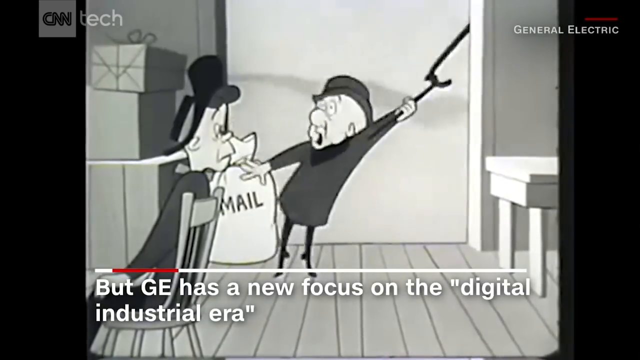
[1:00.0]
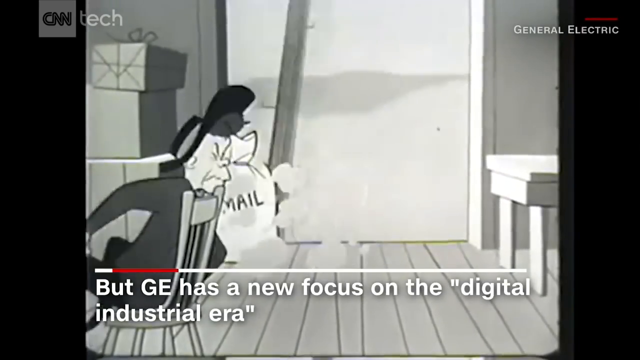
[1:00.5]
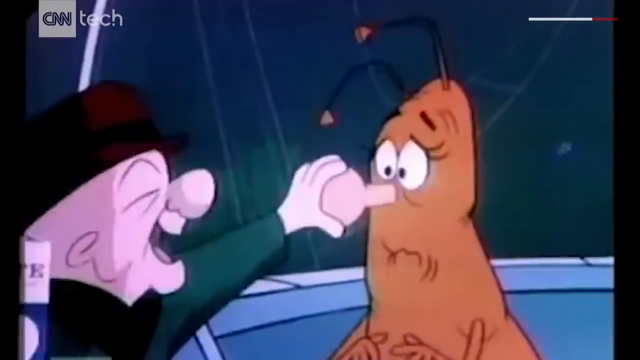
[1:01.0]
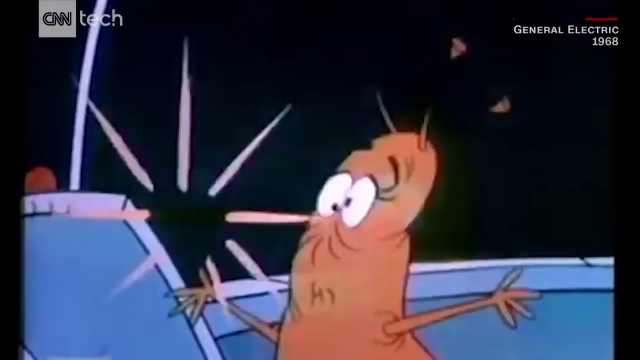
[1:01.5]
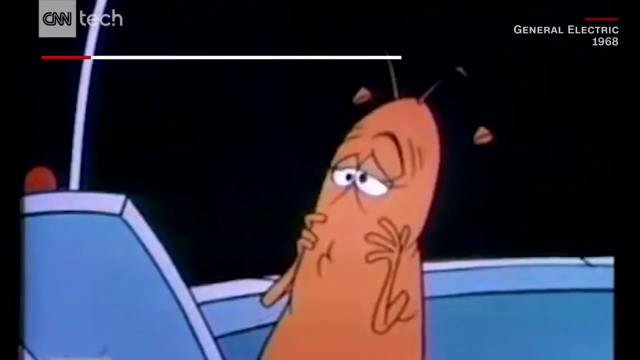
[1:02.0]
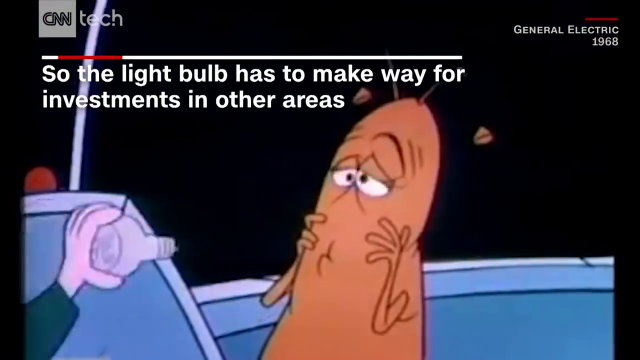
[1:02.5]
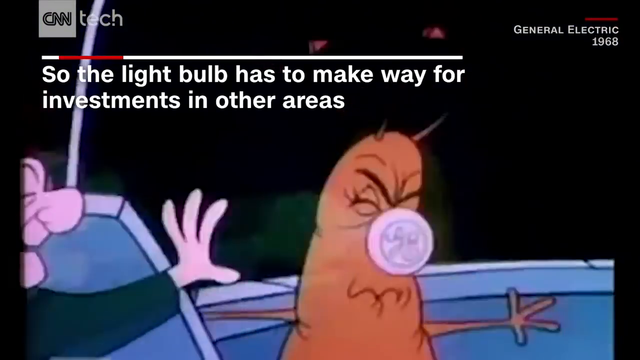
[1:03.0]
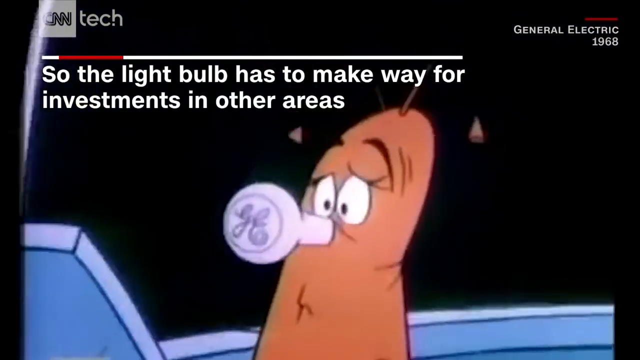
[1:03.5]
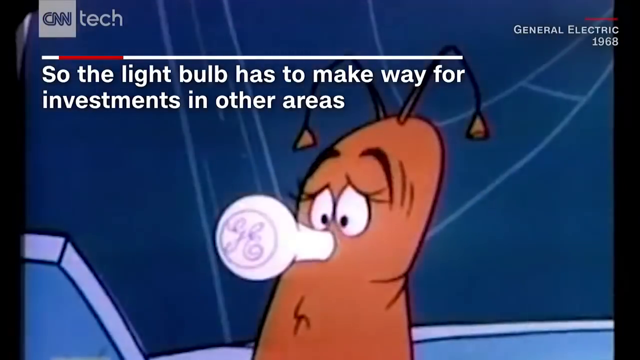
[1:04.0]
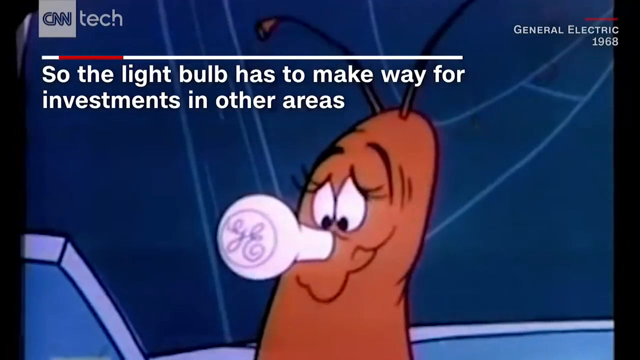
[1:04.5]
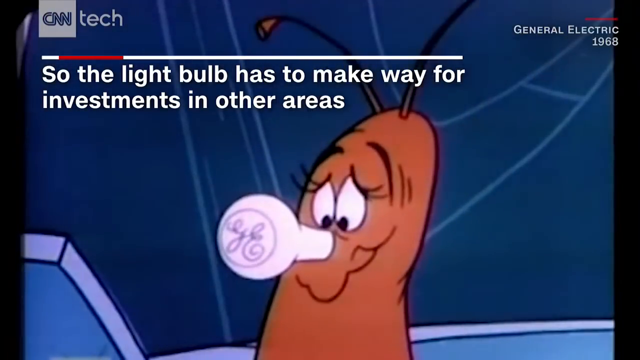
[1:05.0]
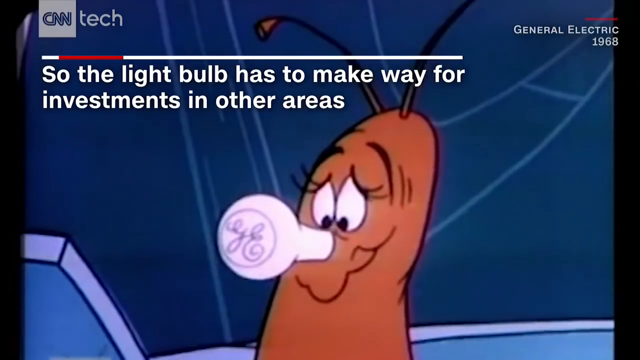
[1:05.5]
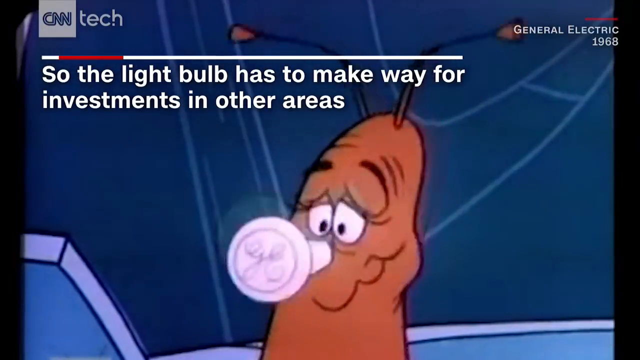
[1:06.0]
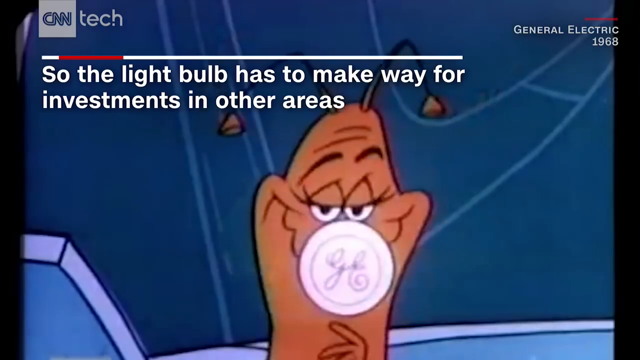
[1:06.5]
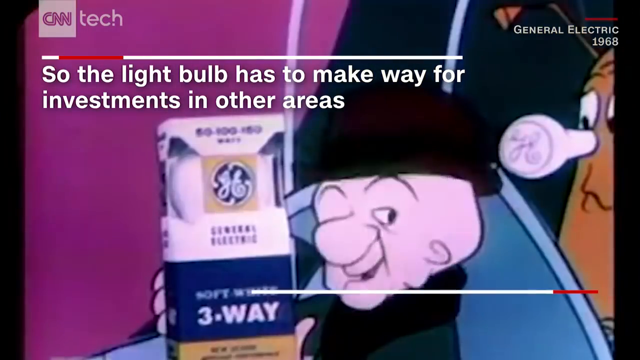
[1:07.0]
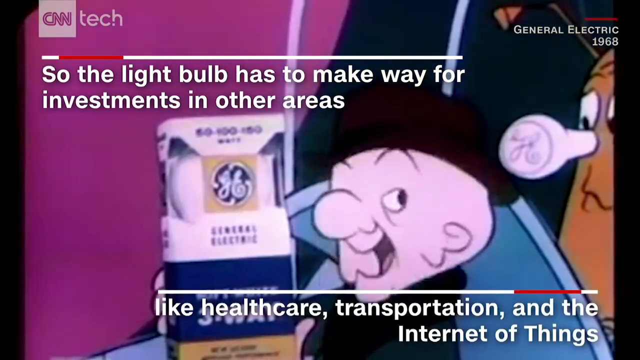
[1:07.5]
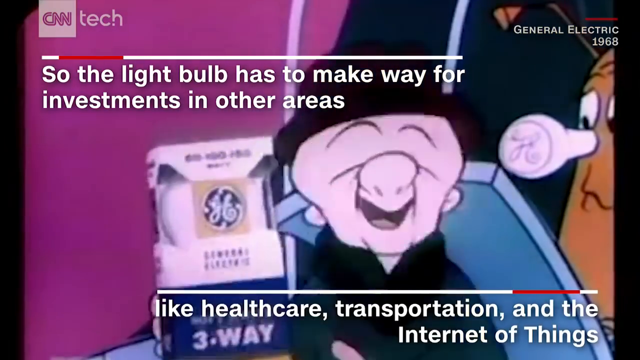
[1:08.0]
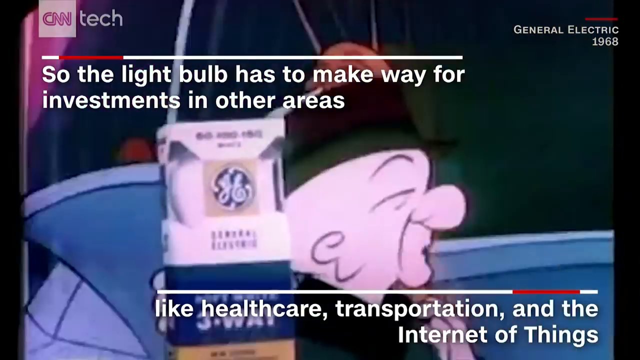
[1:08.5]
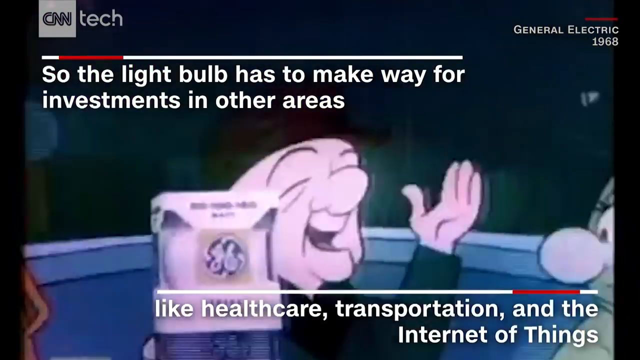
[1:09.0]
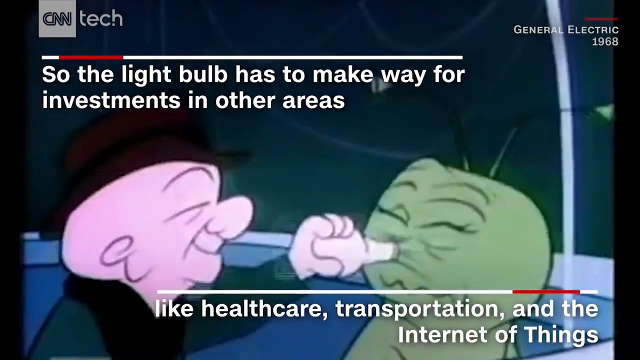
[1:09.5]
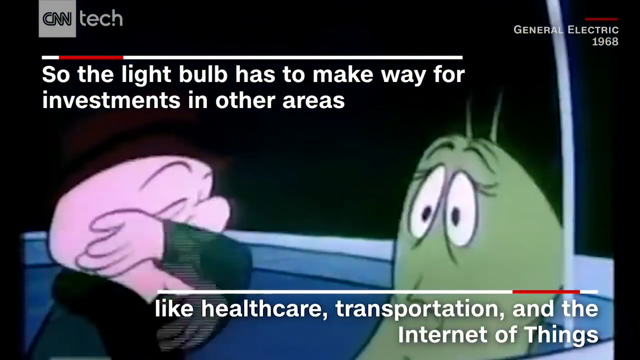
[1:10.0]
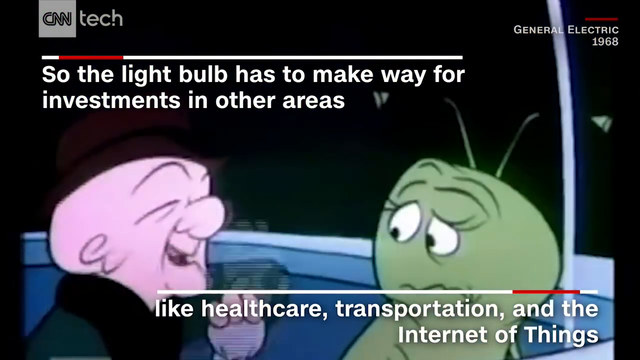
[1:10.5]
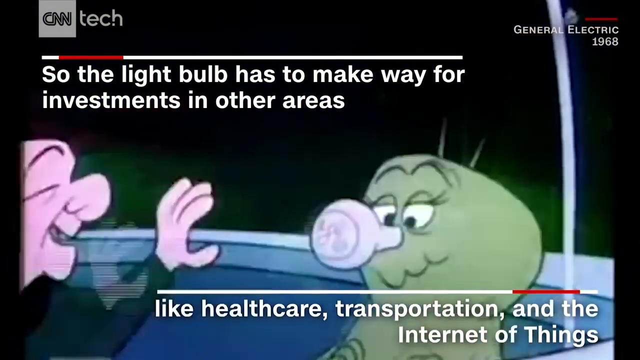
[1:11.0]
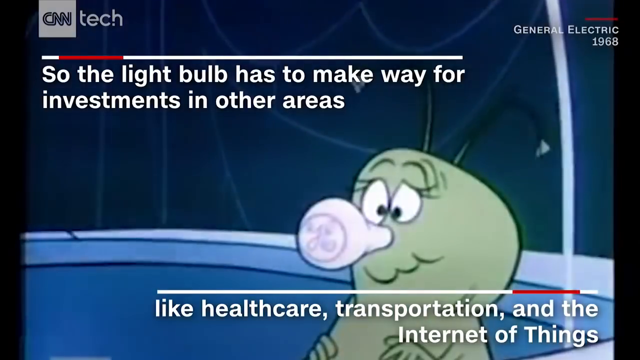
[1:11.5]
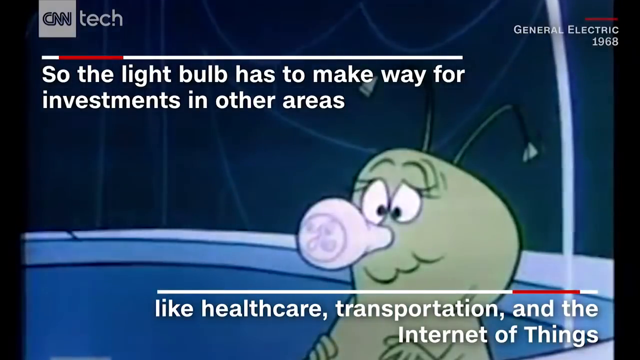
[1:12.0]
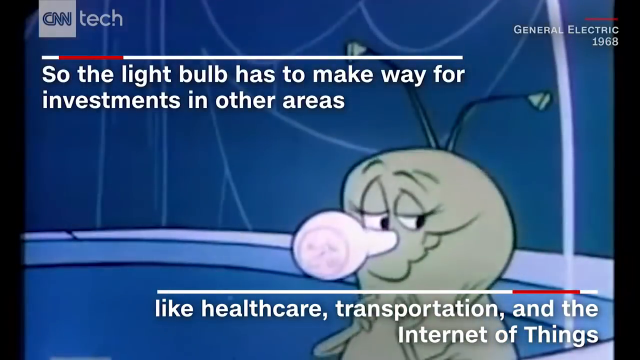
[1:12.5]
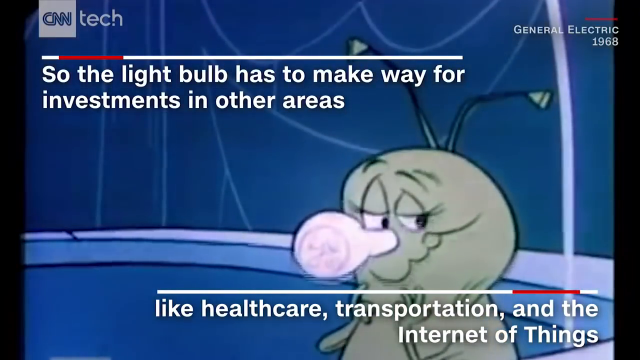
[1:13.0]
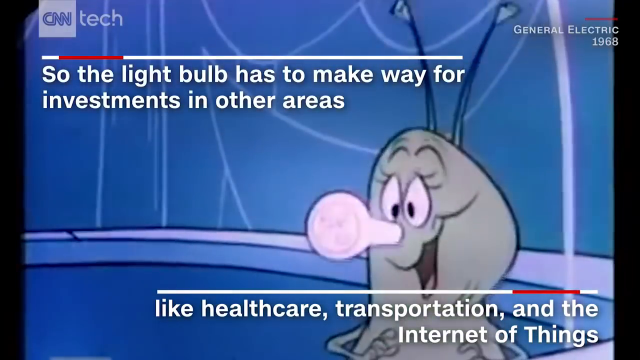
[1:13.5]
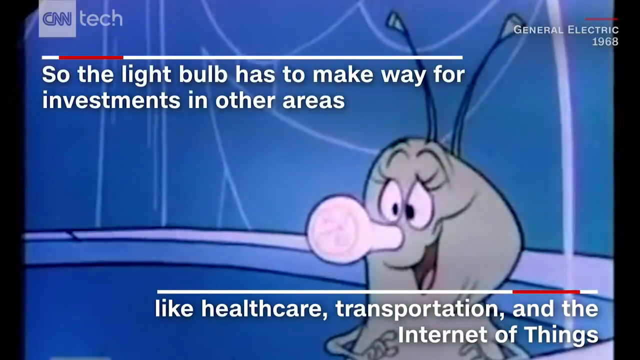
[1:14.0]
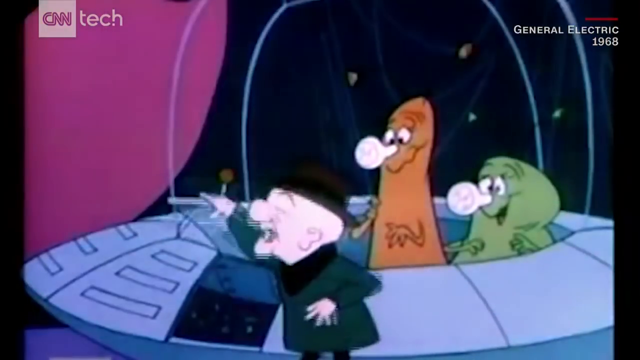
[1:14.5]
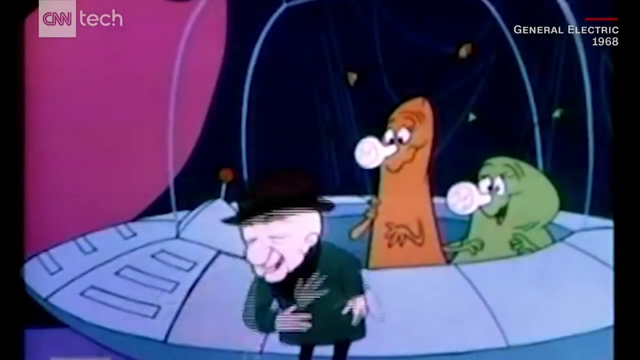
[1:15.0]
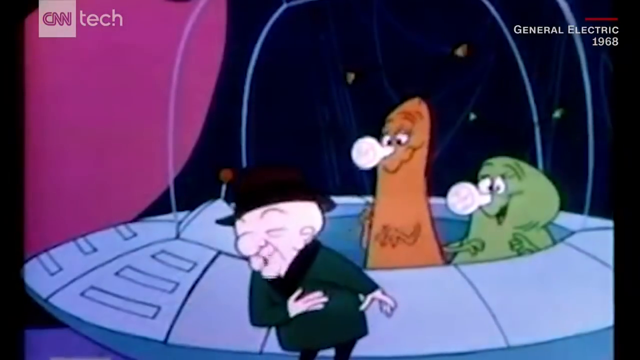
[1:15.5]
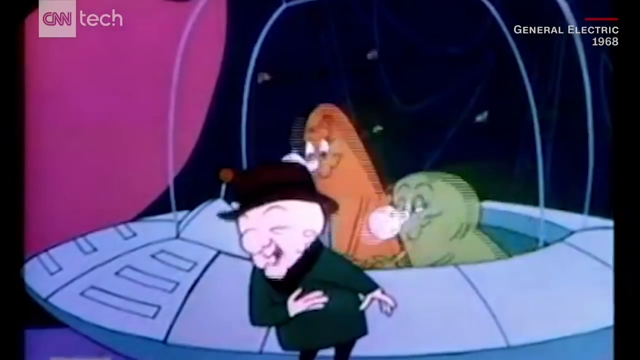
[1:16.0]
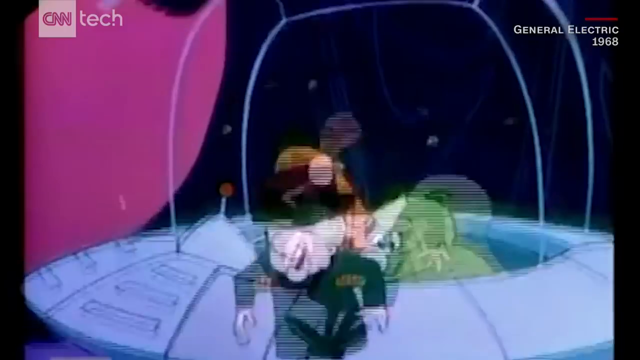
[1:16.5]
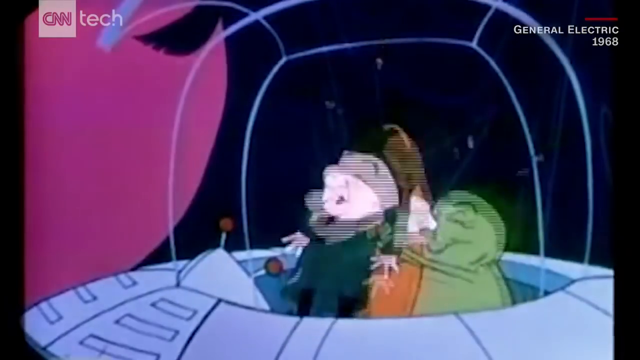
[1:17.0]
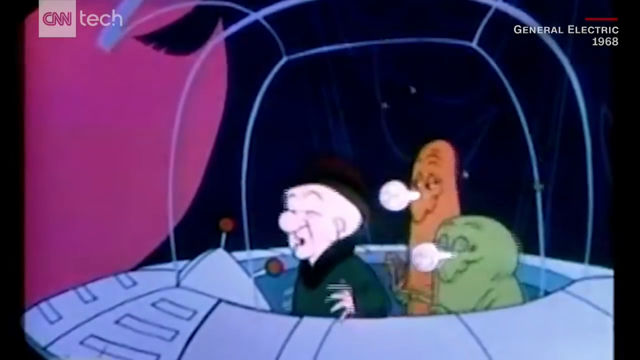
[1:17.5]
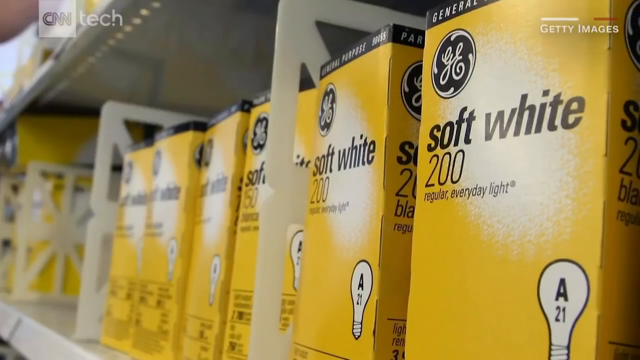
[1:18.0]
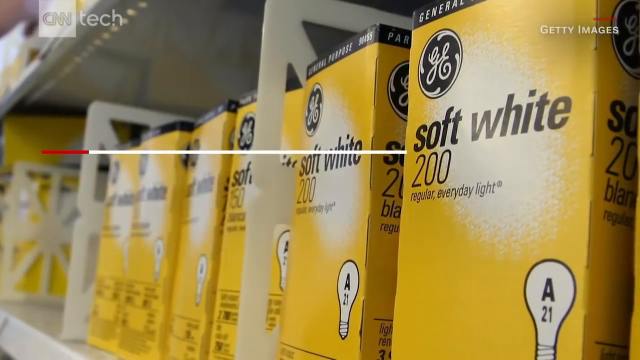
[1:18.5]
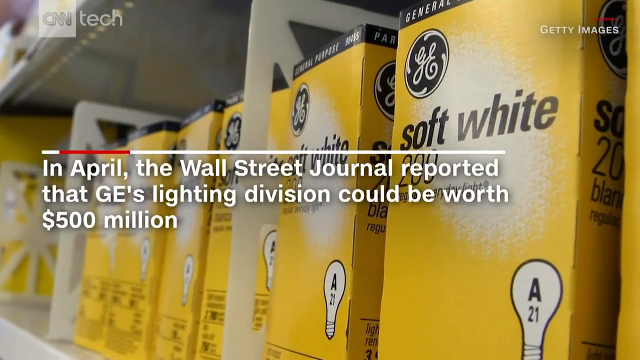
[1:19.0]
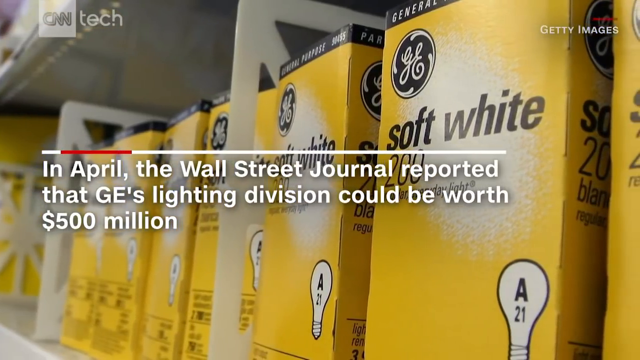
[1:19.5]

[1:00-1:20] In the black and white cartoon, the man and woman are inside the train, and the man is being pulled out of the train, while text across the bottom reads "but GE has a new focus on the digital industrial era." The vintage black and white cartoon is probably from the 50s. The video then moves to a colored cartoon with "General Electric 1968" in the top right corner, featuring the same cartoon character. The man reaches out to what looks like an alien character and grabs its nose, which is shaped like a light bulb, pulls the nose off, and plugs a GE light bulb in its place. A pop-up reads "so the light bulb has to make way for investments in other areas." The alien smiles because its nose lights up. The man in the cartoon smiles, carrying a box of General Electric light bulbs. A new pop-up at the bottom reads "like healthcare, transportation, and the internet of things." The same character walks across the screen to another alien and does the same thing, pulling its nose out and plugging in a GE light bulb, which lights up. Both aliens are excited that their noses light up; they are inside a spaceship, and they pull the man inside with them. The video then goes to a shelf in the store again, showing boxes of GE soft white 200 light bulbs, with text over it reading "in April, the Wall Street Journal reported that GE's lighting division could be worth $500 million."